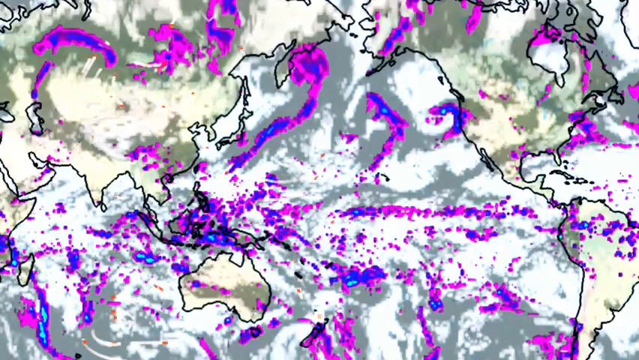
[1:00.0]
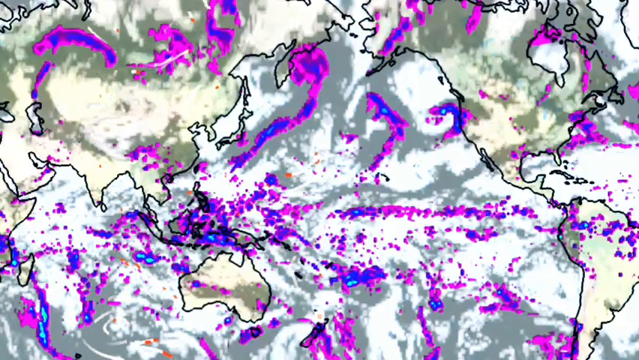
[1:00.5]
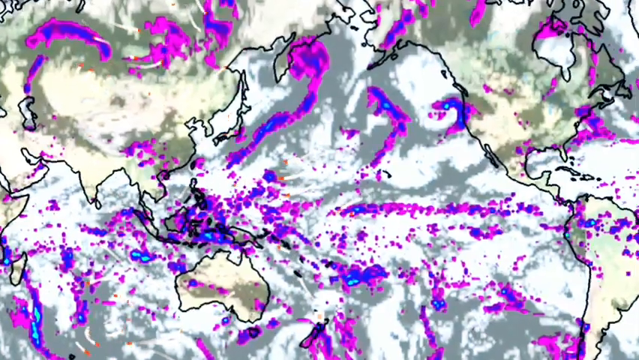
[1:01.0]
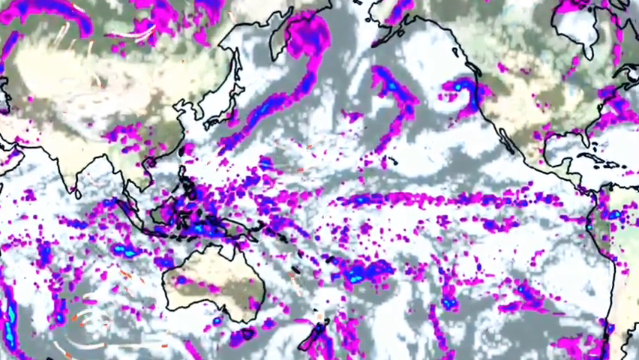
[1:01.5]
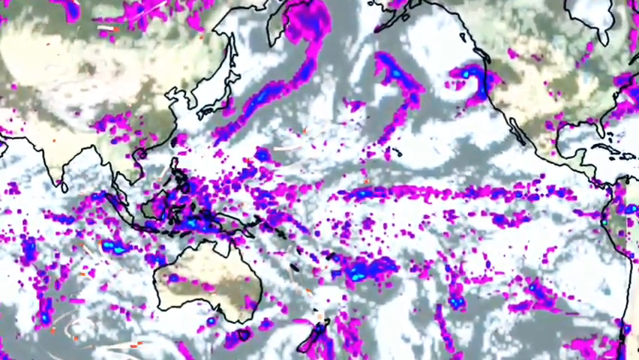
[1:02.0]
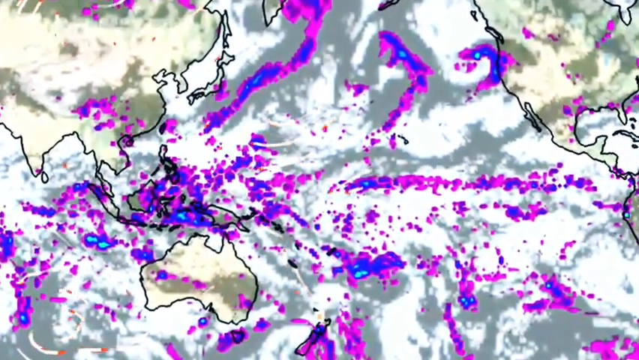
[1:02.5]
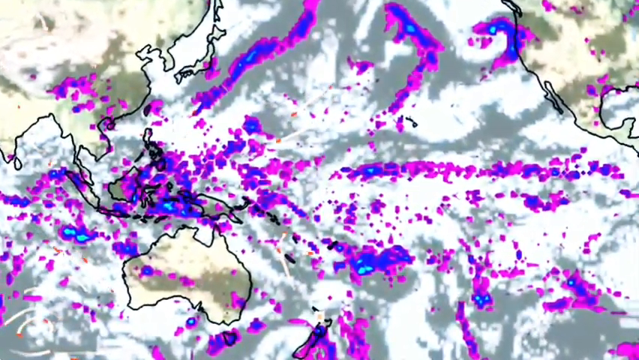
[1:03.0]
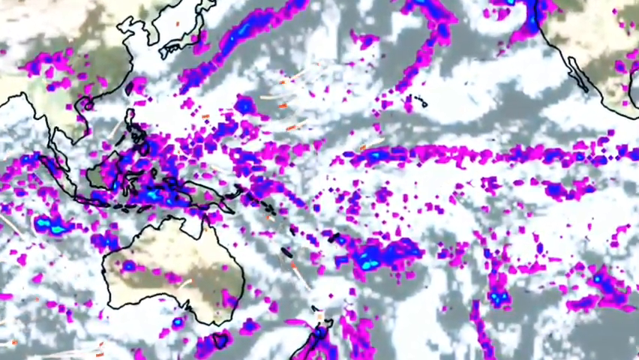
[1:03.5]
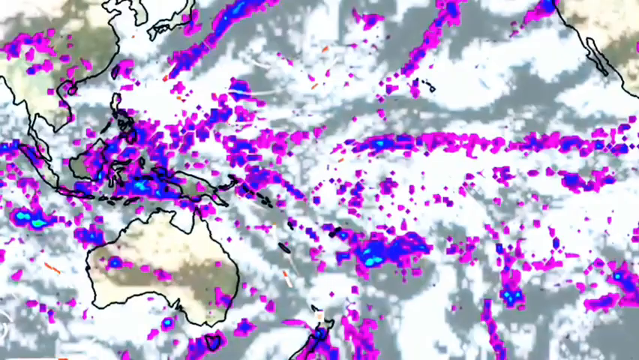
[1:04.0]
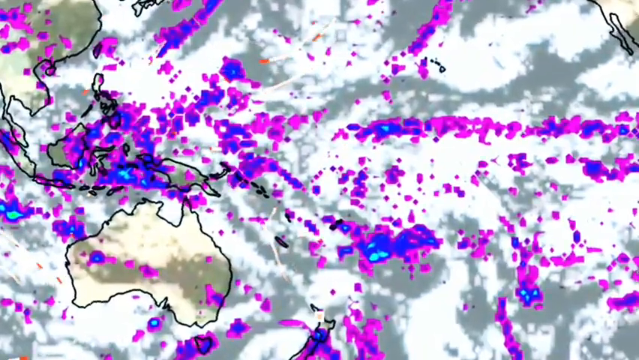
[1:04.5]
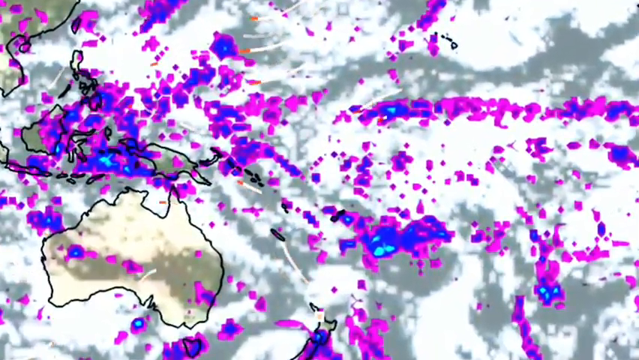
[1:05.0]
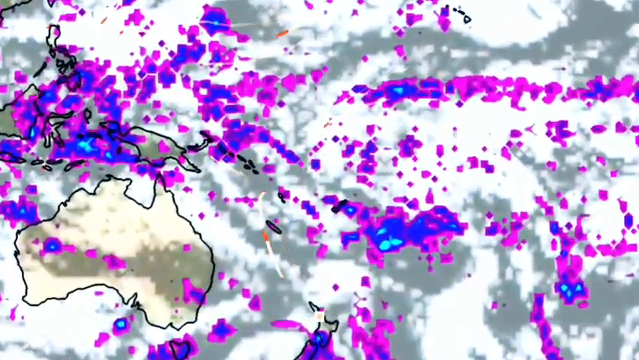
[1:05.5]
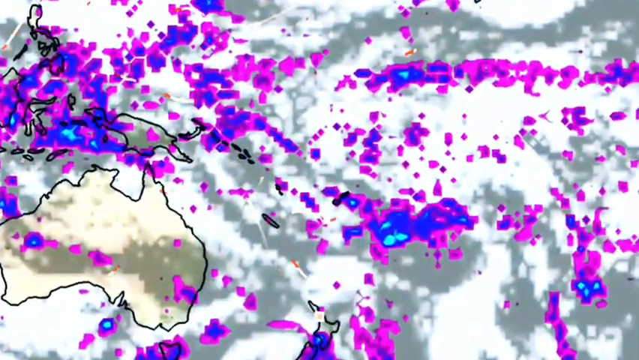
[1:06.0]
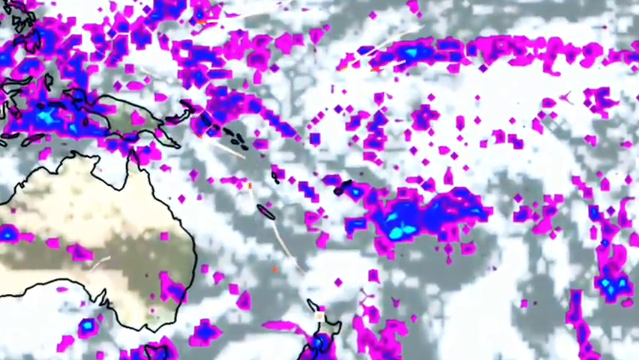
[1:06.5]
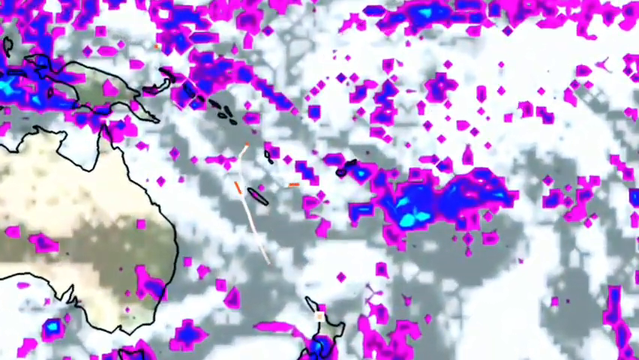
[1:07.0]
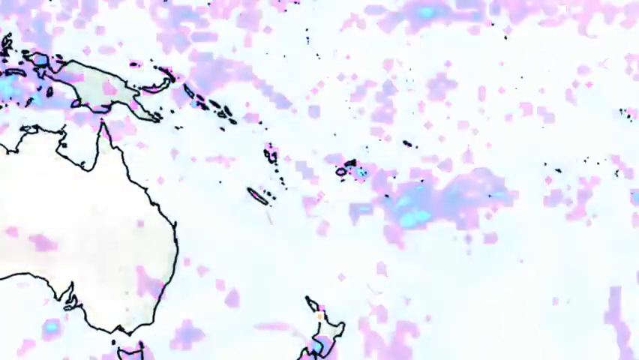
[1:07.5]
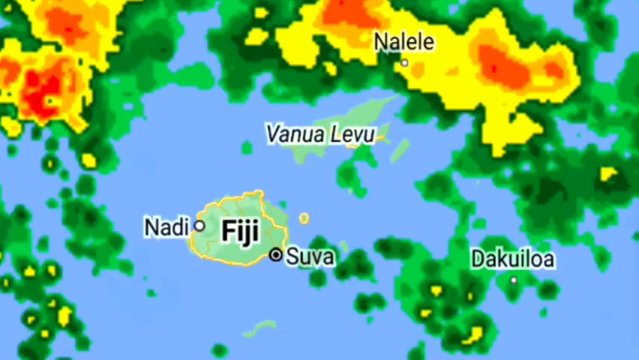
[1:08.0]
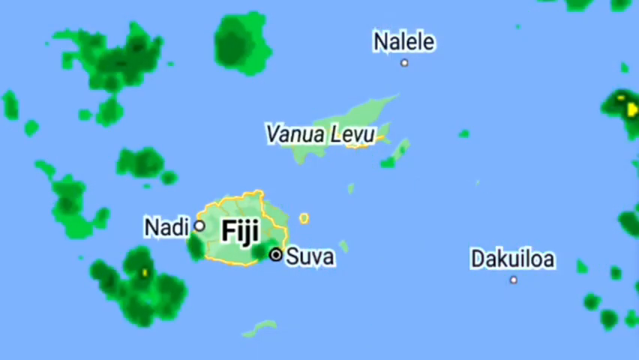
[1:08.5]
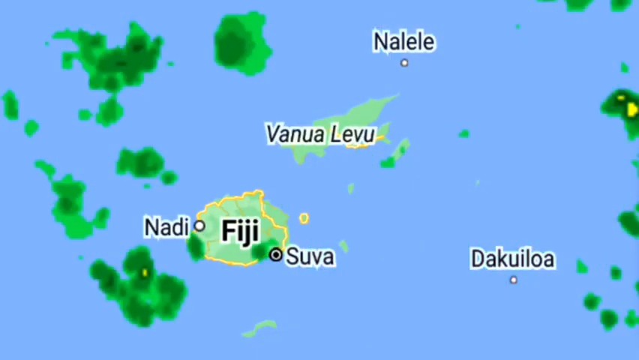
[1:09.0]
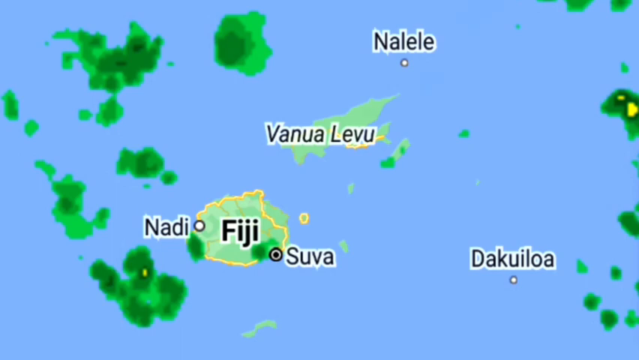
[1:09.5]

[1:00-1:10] A map shows a landmass in the top left corner shaped like Australia, though it is not labelled. Down to its right is another landmass, and in the top right corner of the screen is the beginning of another landmass. White and gray areas that look like clouds cover the whole map, and purple, bright blue and light blue spots all over it show weather patterns. The camera slowly zooms in, and then the screen changes to a blue screen with "Fiji" written in the middle over the country of Fiji, which is yellow. A small dot on the left side of Fiji is labelled "Nadi", and a small black dot on the right side of Fiji is labelled "Suva". Above that it says "Vanua Lavu", and above that "Nalil". The screen is covered with big yellow, orange, red and green spots showing the intensities of storms.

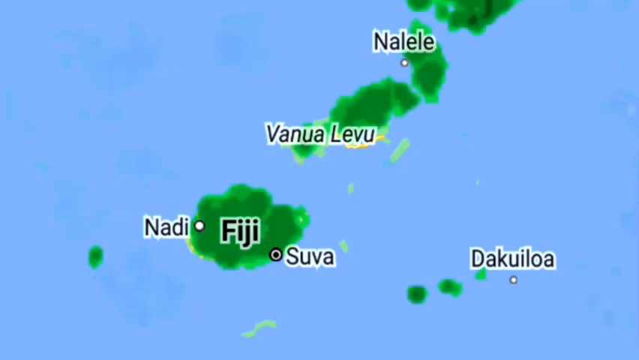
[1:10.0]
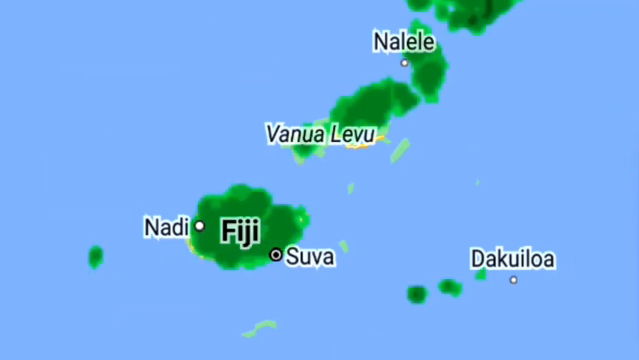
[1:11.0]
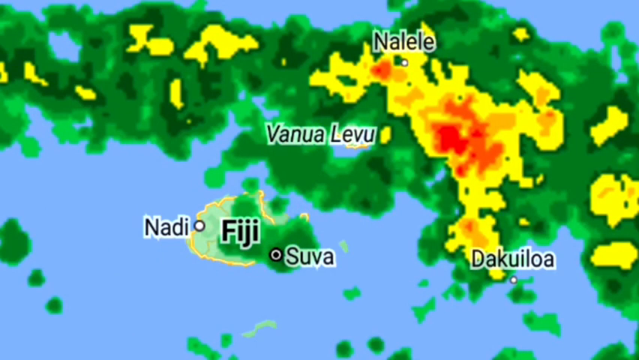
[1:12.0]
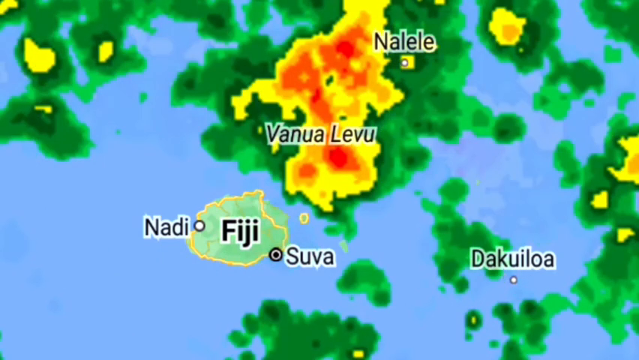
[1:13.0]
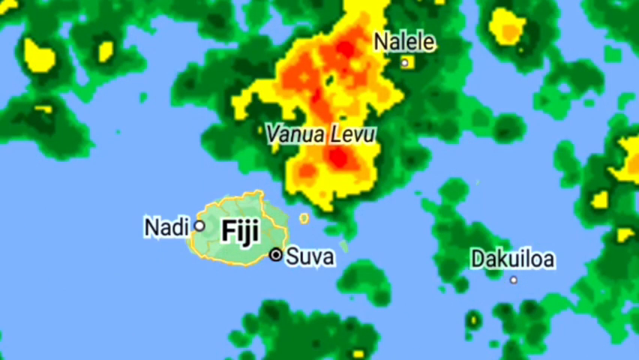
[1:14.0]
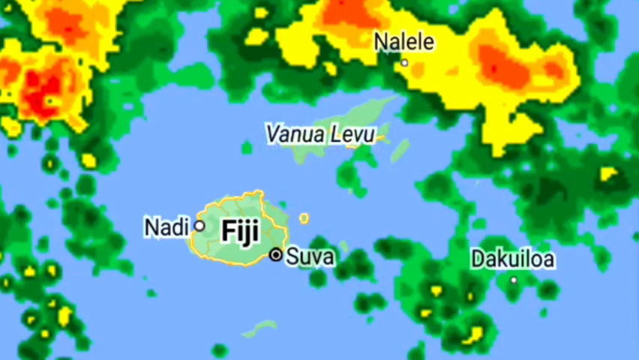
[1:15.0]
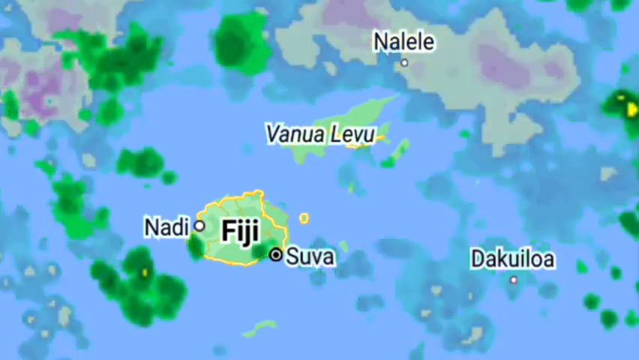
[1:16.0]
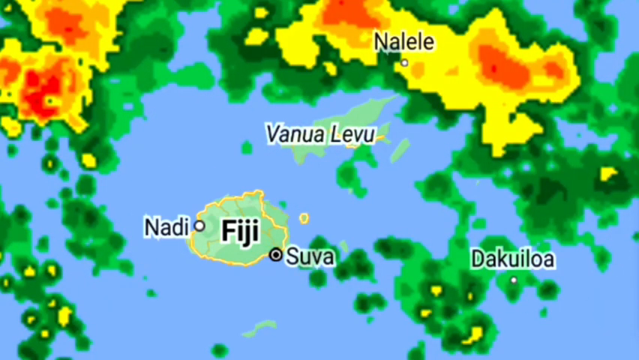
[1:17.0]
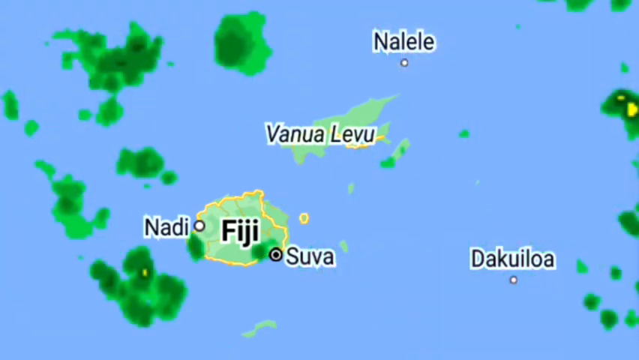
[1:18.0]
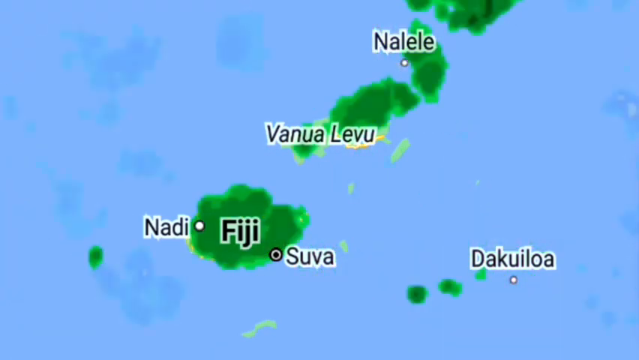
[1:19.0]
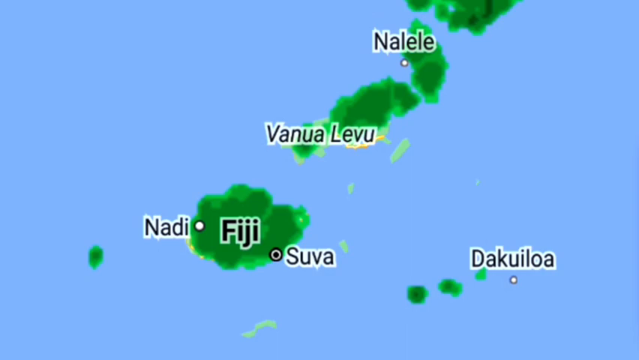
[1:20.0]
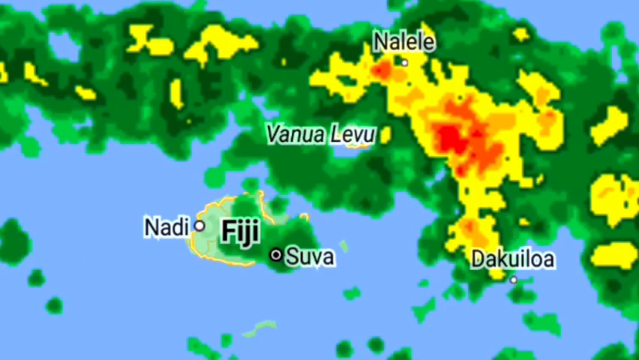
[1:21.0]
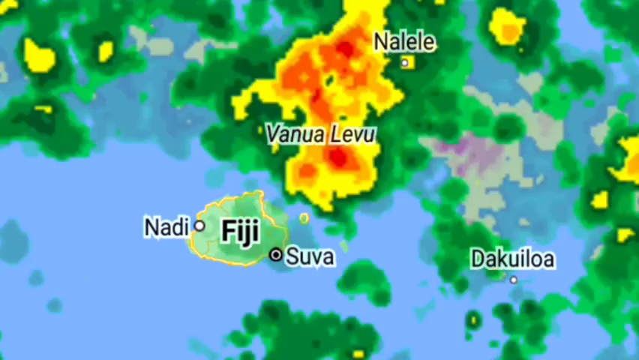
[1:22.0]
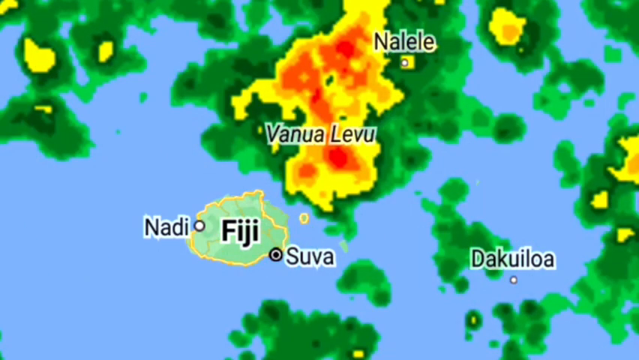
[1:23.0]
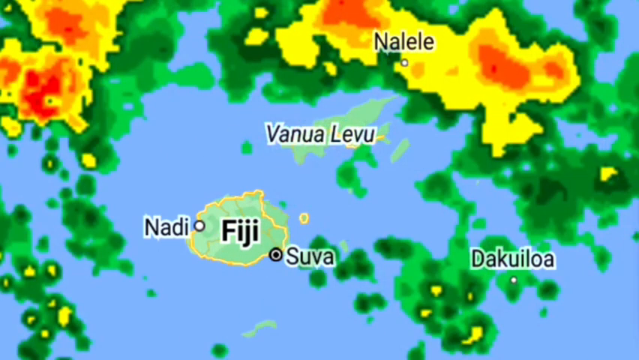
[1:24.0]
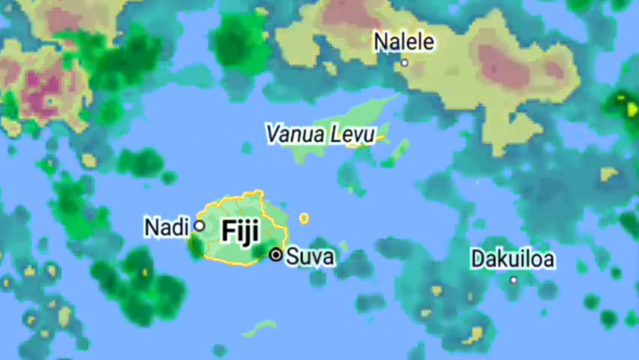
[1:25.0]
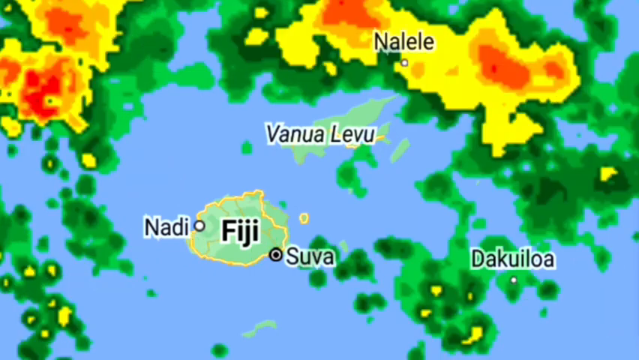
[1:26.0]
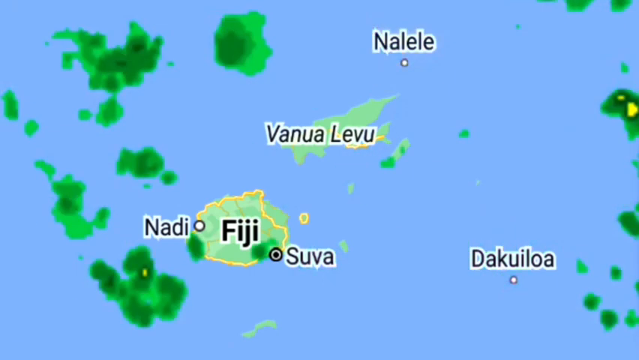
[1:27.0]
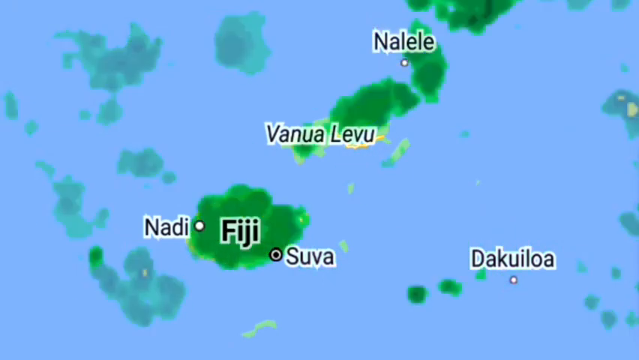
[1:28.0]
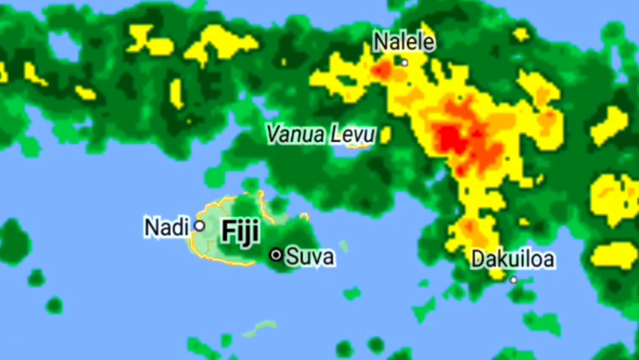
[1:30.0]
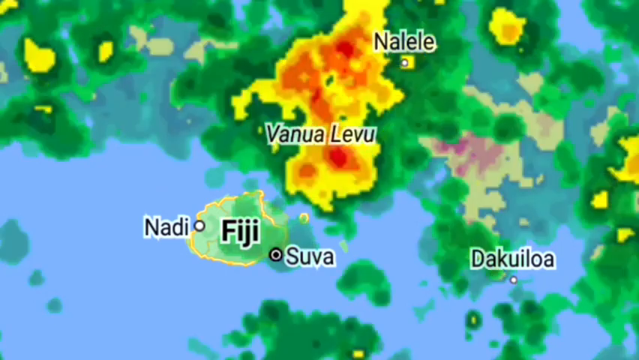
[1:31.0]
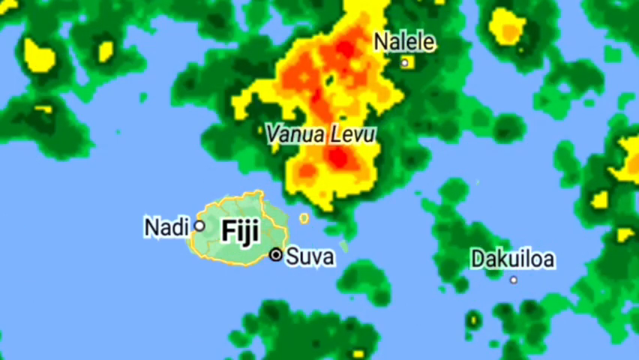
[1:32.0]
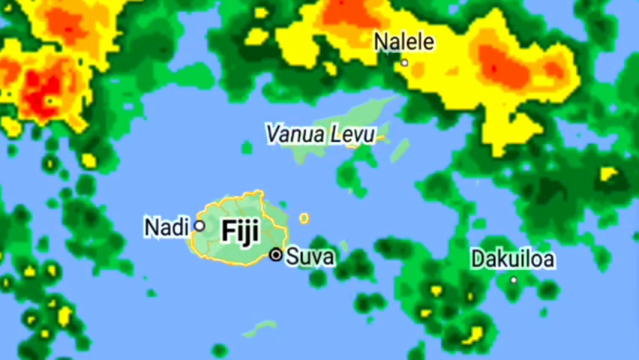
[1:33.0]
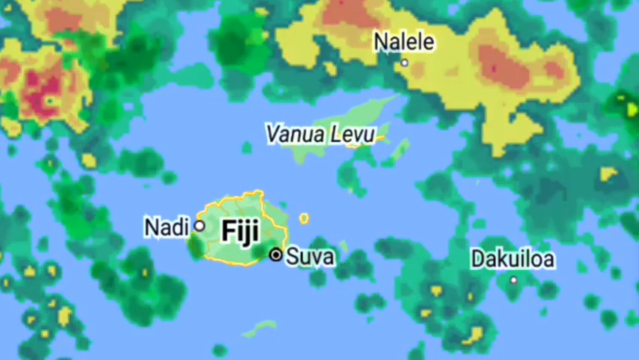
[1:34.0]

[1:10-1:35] On a blue screen, a small landmass in the middle has the word "Fiji" written on it in black. On its left side is the word "Nadi", and on its right side is a small black dot with the word "Suva". Above it are the words "Vanua Lavu", and above that is "Nalil". Large green, yellow, red and orange spots show the intensities of rain and storms going through the area. The screen then changes and all the colours disappear except green. Fiji is still visible and covered with green, as are Vanua Lavu and Nalil. On the right side of the screen is a small white dot with "DaKuiloa" above it. The rest of the screen is solid blue.